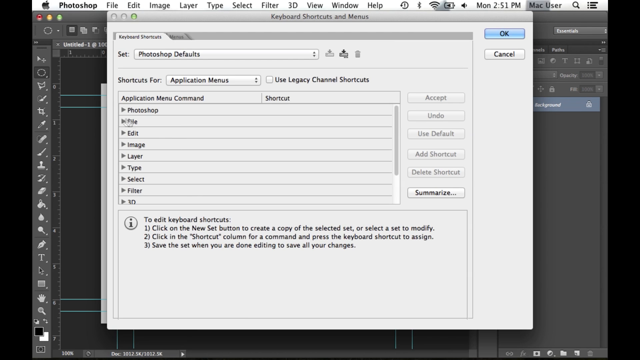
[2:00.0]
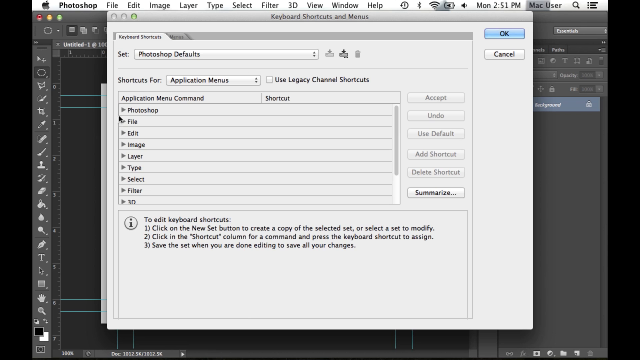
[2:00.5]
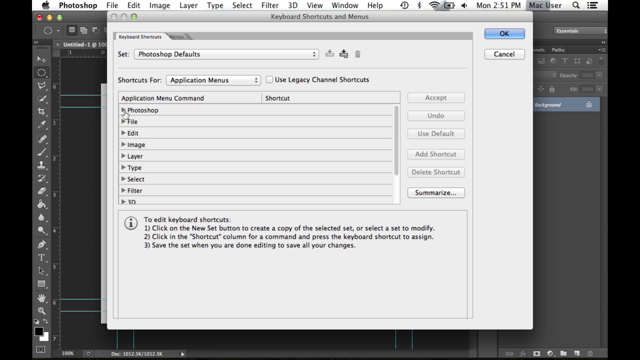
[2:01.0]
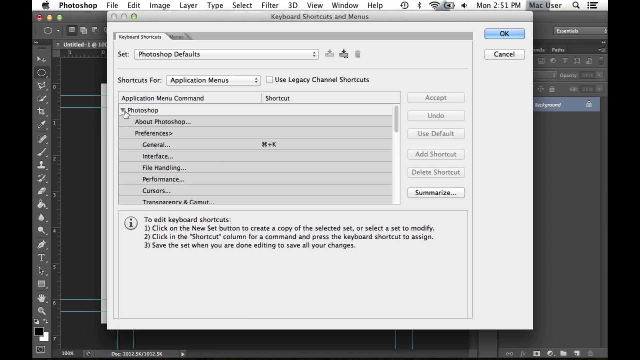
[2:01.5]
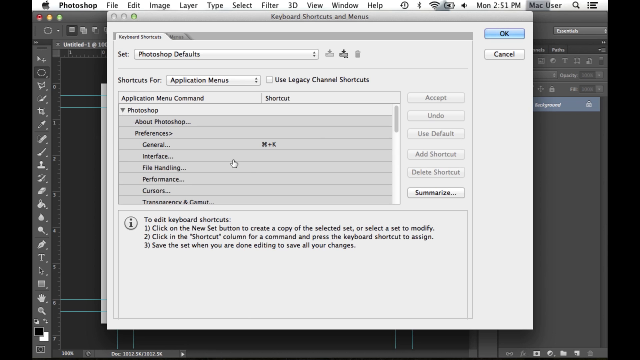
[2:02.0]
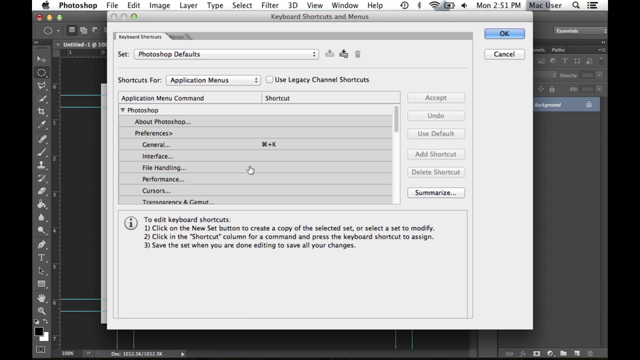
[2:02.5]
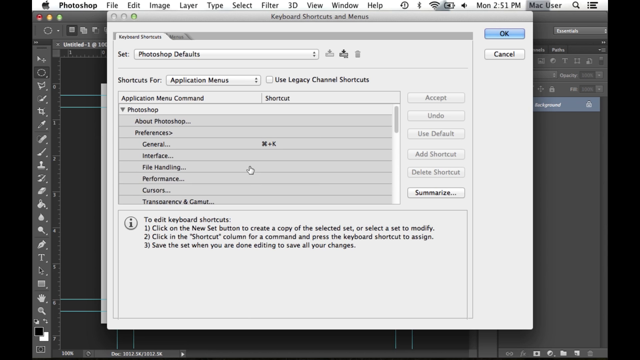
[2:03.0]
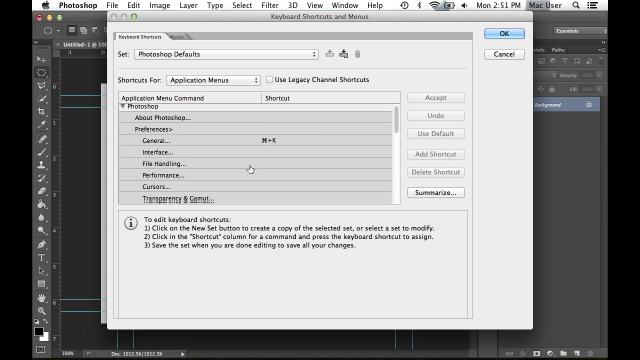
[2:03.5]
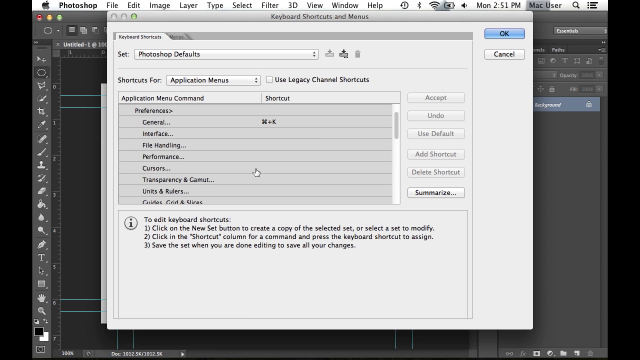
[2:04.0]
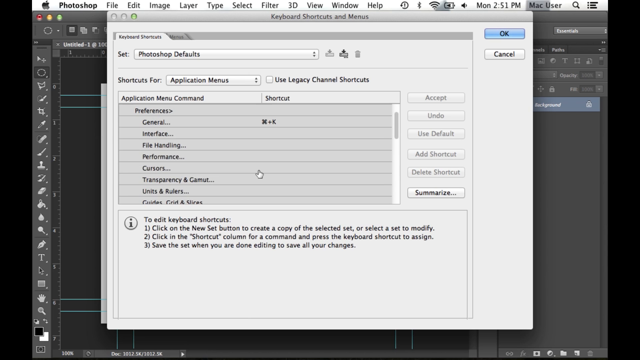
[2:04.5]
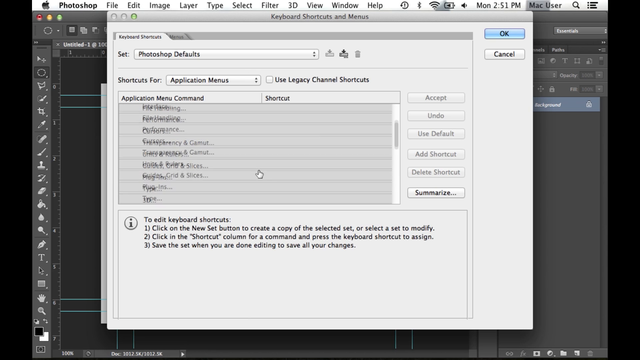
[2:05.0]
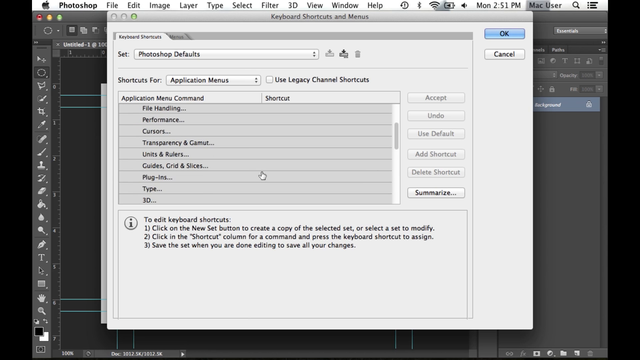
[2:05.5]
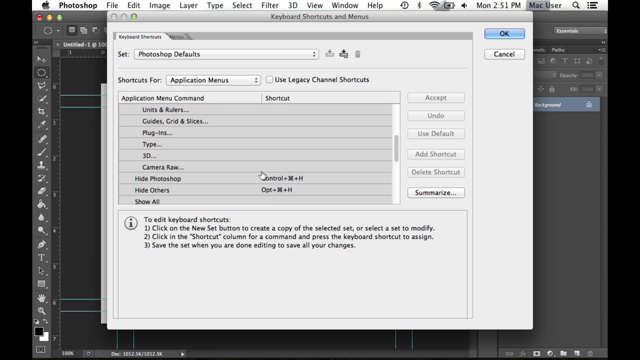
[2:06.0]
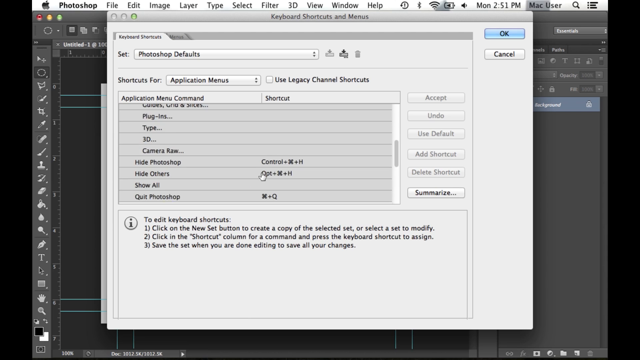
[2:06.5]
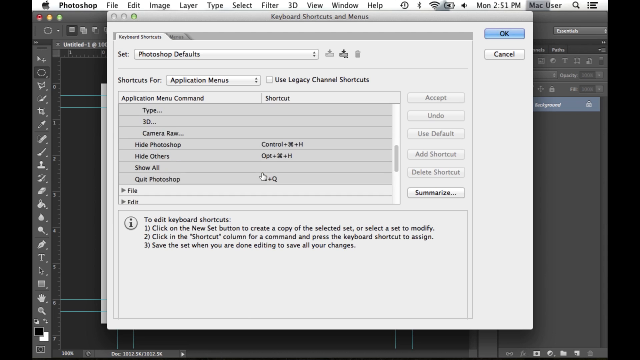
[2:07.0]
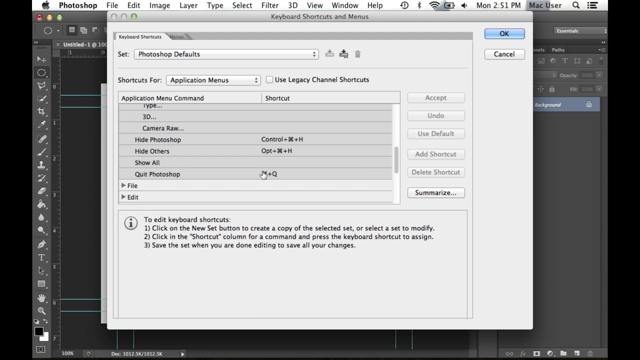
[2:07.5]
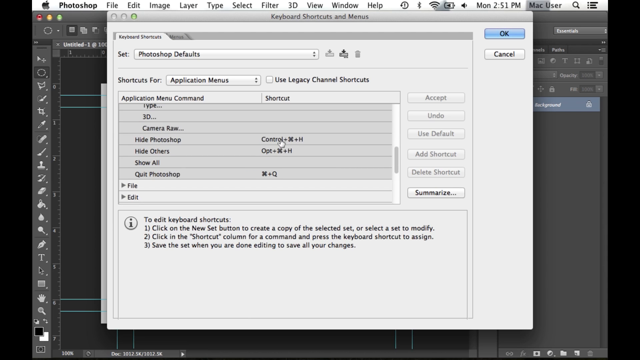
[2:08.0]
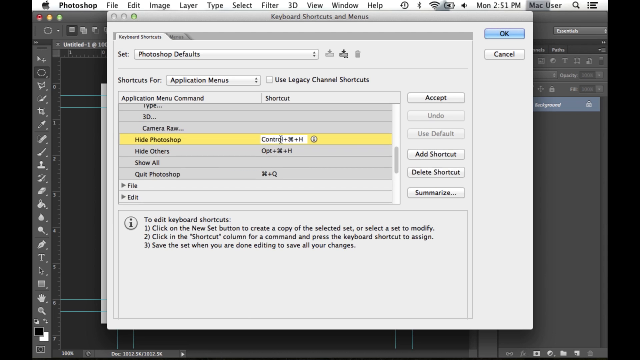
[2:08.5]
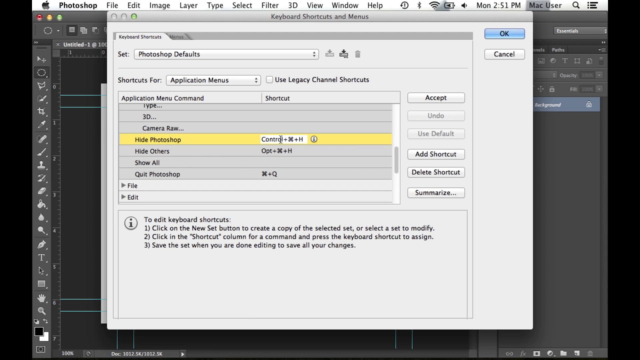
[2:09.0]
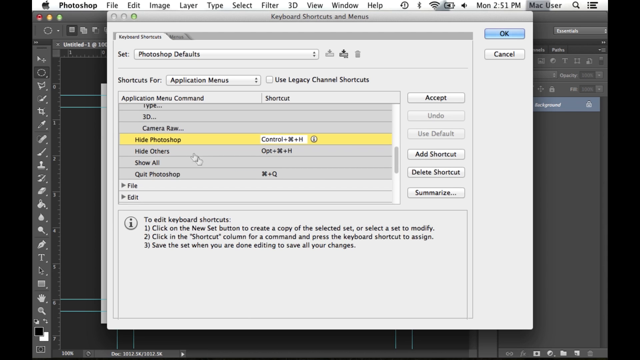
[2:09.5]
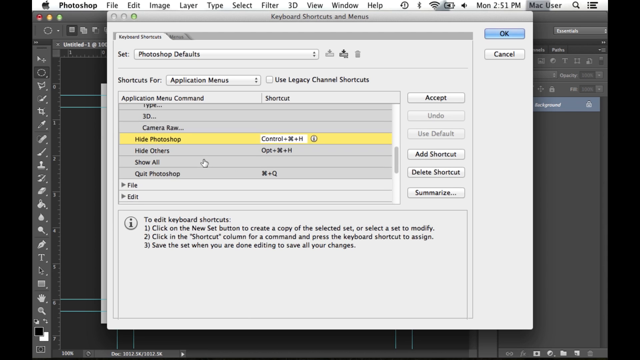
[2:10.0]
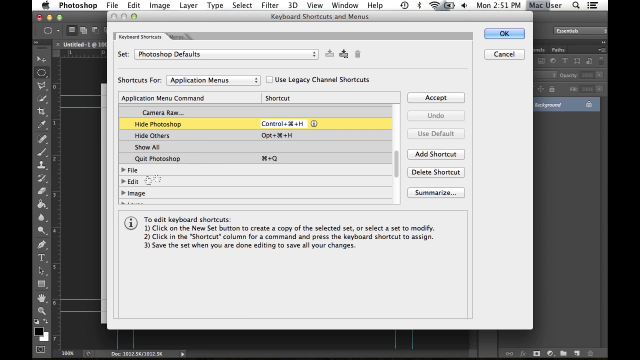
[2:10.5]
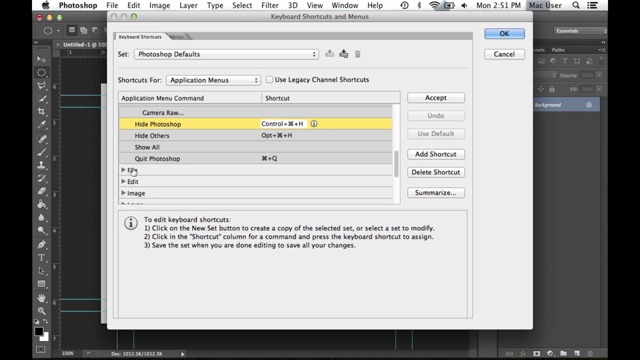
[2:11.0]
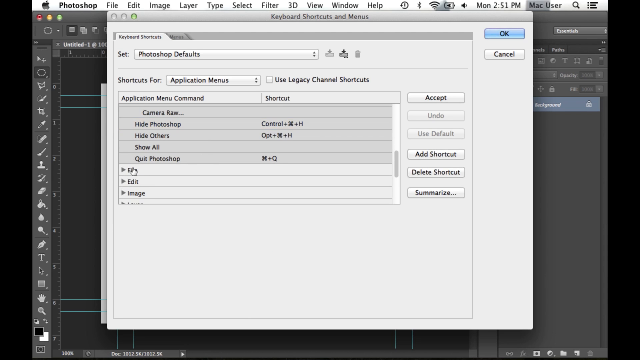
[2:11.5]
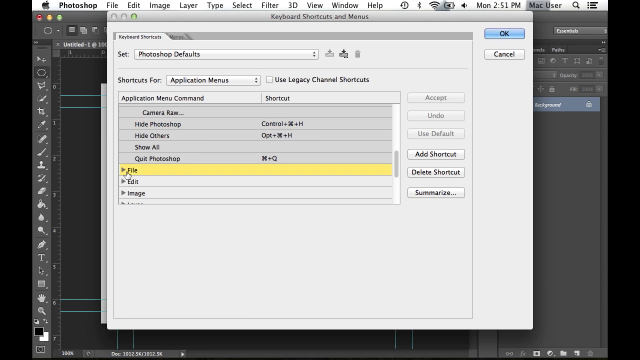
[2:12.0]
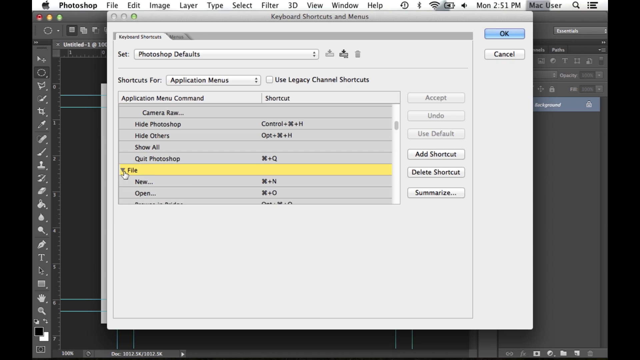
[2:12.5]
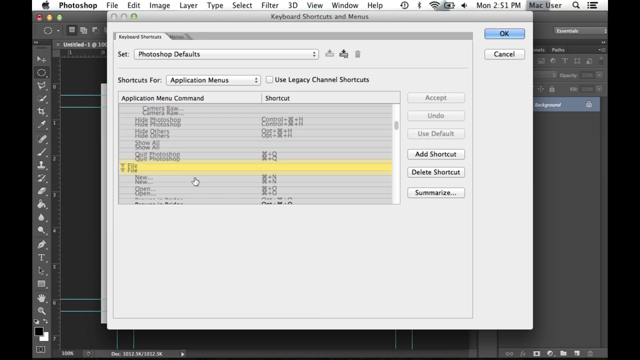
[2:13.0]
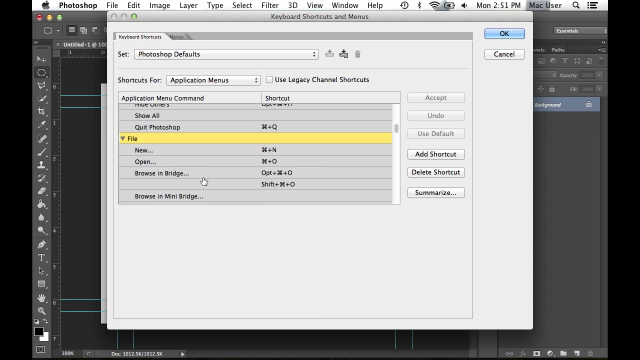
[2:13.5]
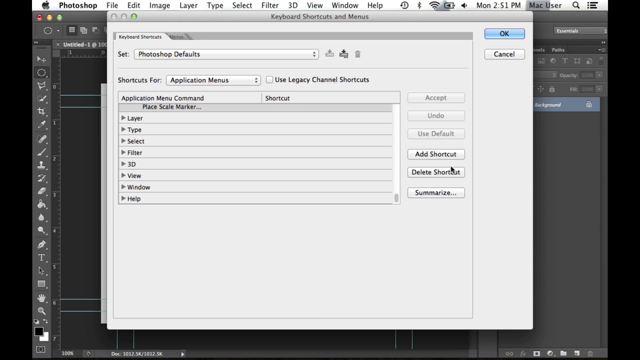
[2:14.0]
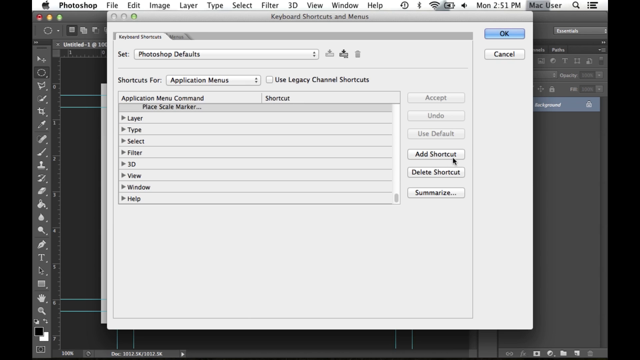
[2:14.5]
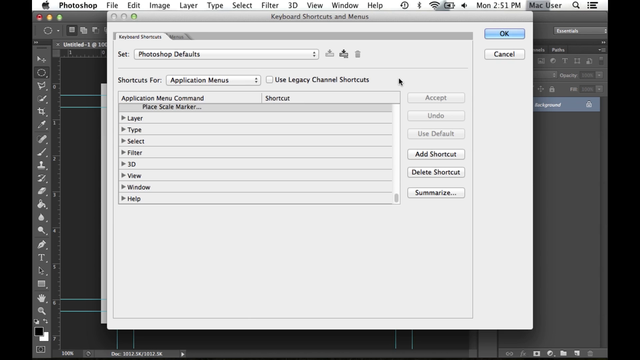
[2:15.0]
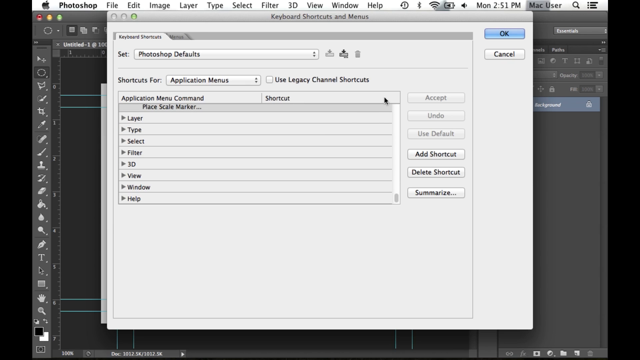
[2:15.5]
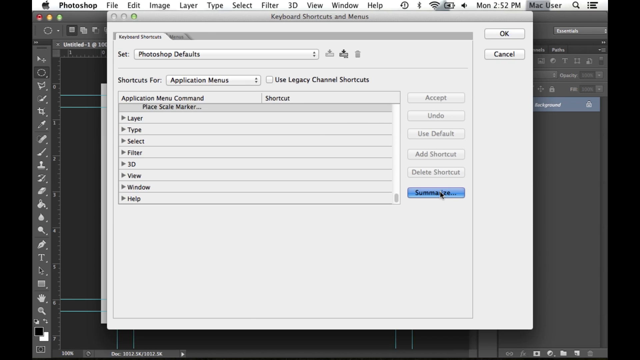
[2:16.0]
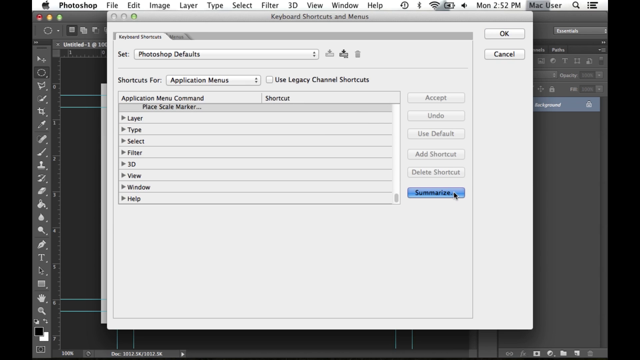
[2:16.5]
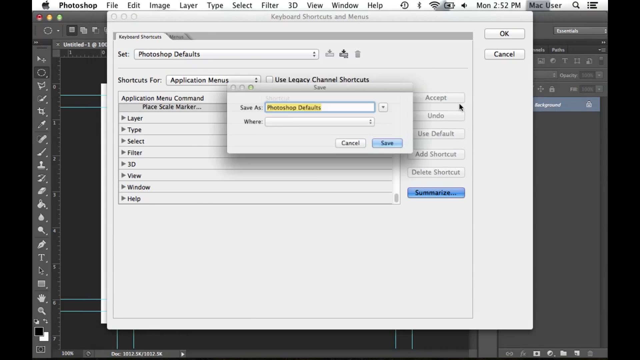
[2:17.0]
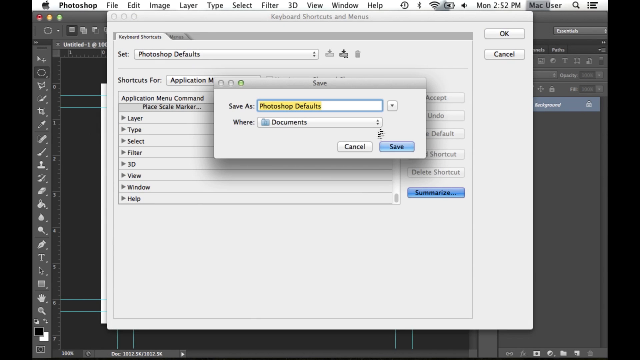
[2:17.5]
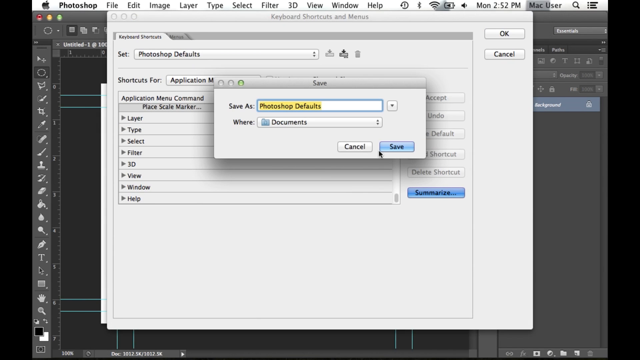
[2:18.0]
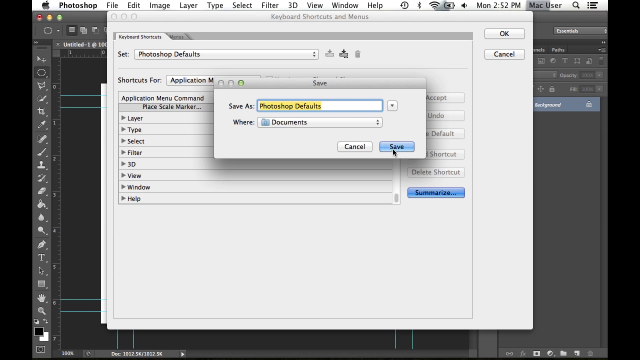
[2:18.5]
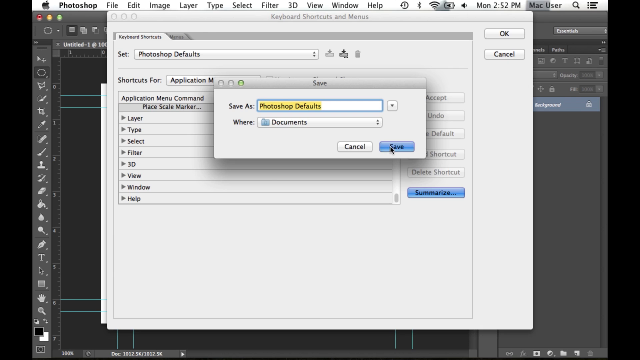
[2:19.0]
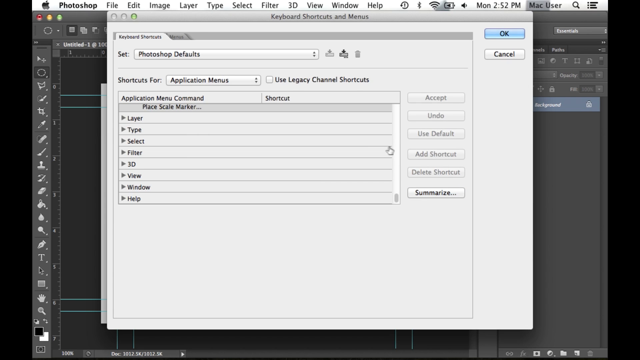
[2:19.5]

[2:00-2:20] The video is a little wider than it is tall and shows a macOS desktop running Photoshop, indicated by the Apple in the upper left-hand corner and the word "Photoshop" after it, followed by the menu File, Edit, Image, Layer, Type, Select, Filter, 3D, View, Window and Help. A menu reading "Keyboard Shortcuts and Menus" is open at the start. A dropdown on the left reading "Photoshop" is pulled down, and the selection arrows down repeatedly until it reaches "Hide Photoshop", which is opened for editing, but nothing is done after clicking it. File is then clicked and dropped down, and Summarize is chosen, bringing up a Save As window. Save is clicked, keeping the default. The menu in the upper left is dropped down again and the selection arrows down to the bottom, back to "Hide Photoshop".